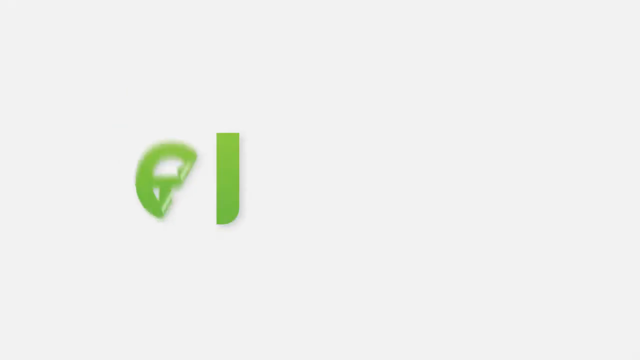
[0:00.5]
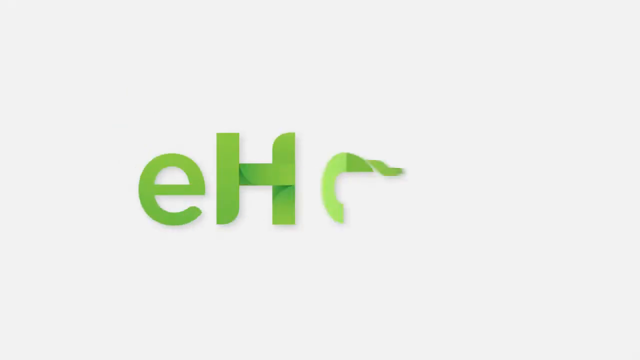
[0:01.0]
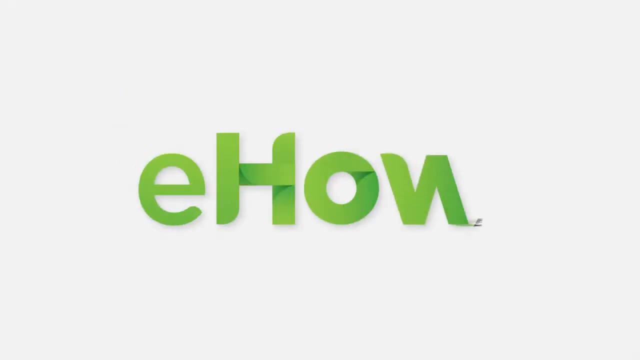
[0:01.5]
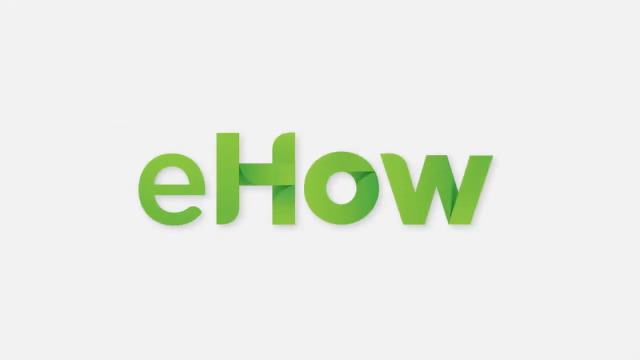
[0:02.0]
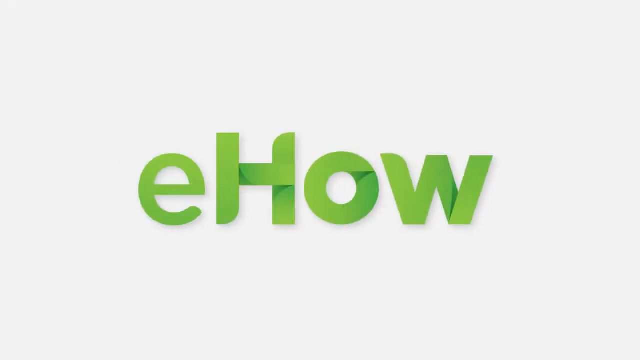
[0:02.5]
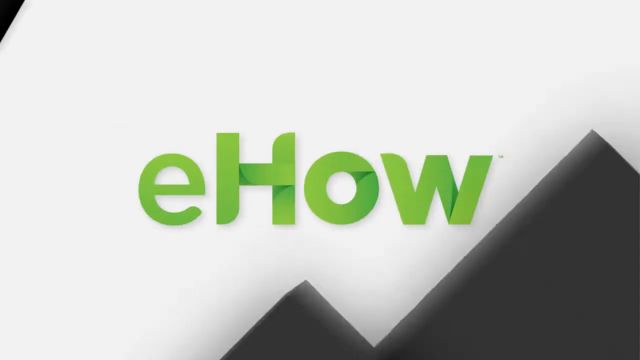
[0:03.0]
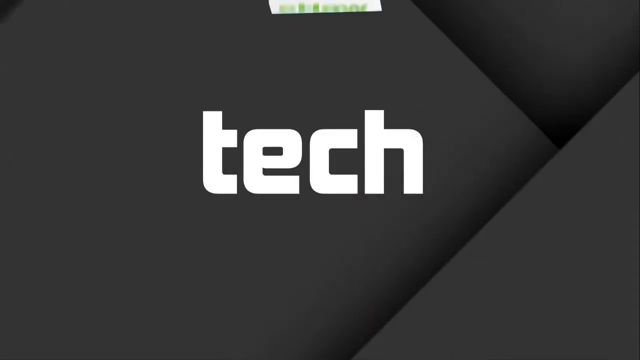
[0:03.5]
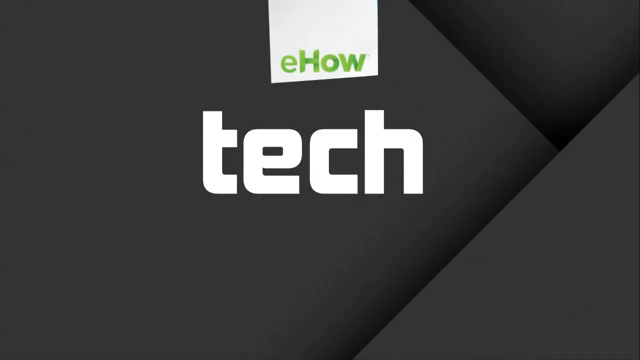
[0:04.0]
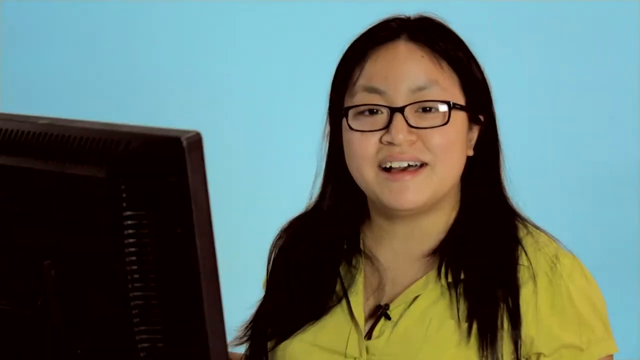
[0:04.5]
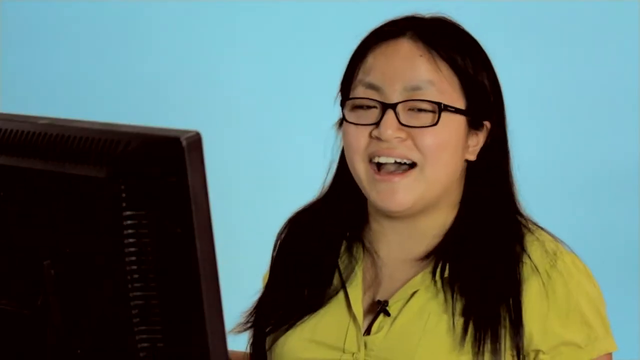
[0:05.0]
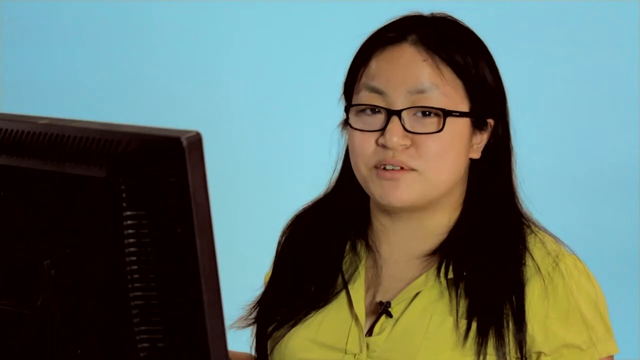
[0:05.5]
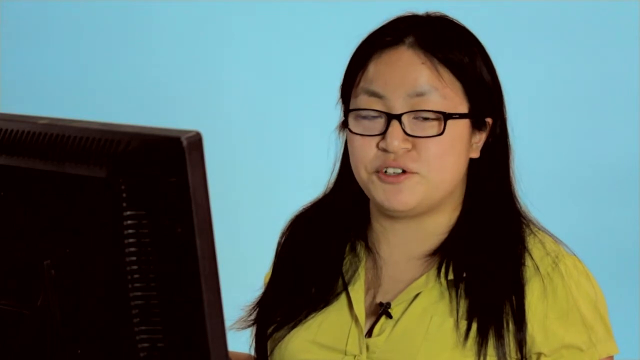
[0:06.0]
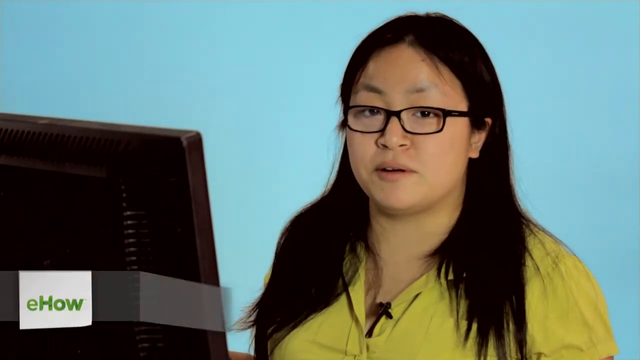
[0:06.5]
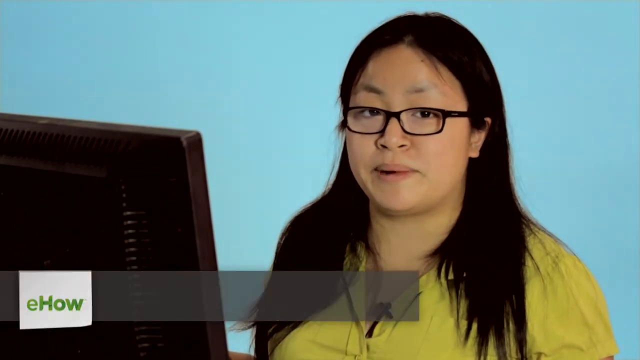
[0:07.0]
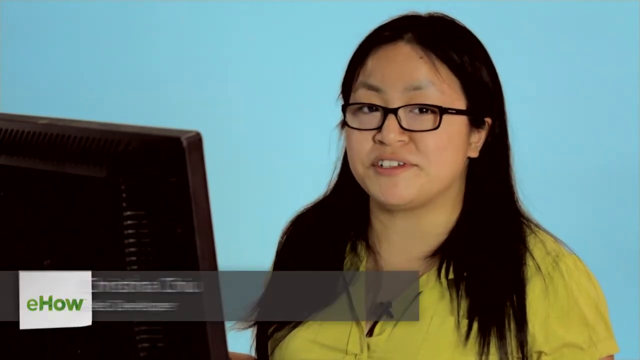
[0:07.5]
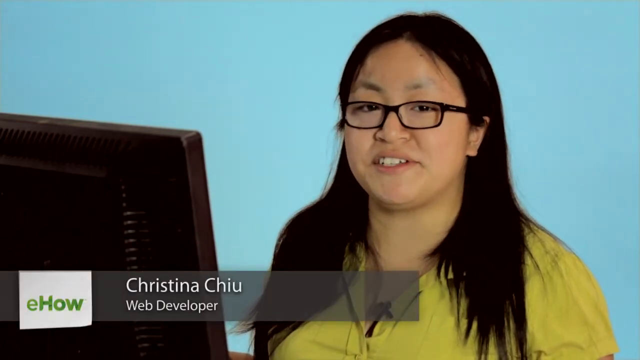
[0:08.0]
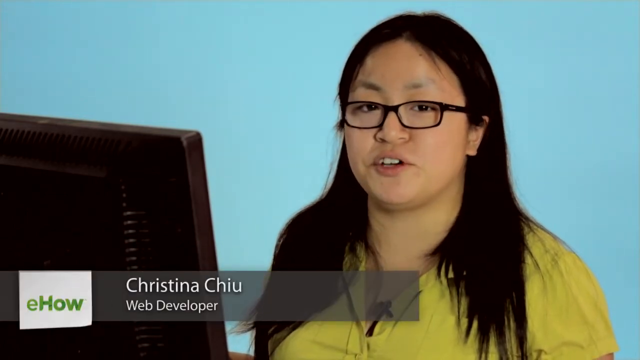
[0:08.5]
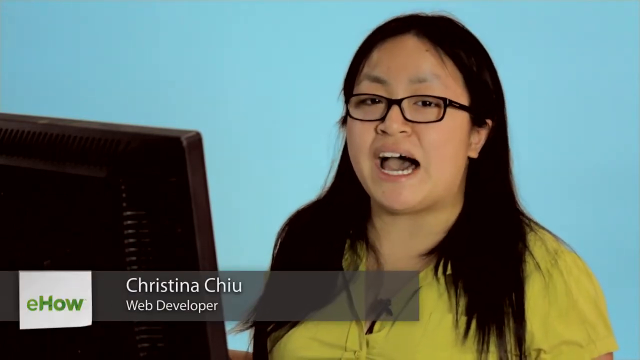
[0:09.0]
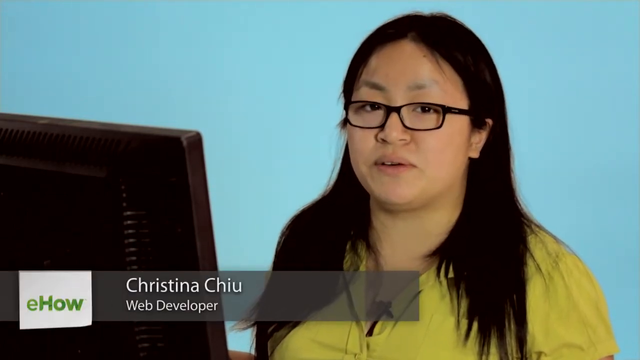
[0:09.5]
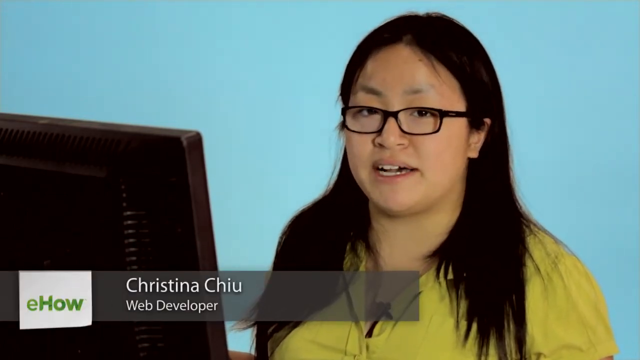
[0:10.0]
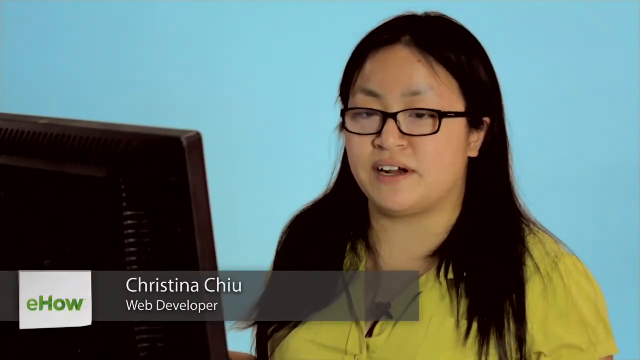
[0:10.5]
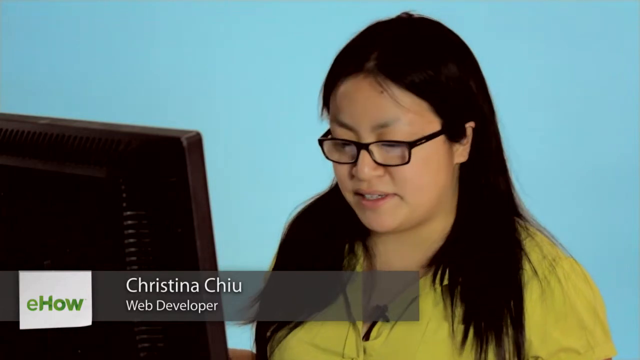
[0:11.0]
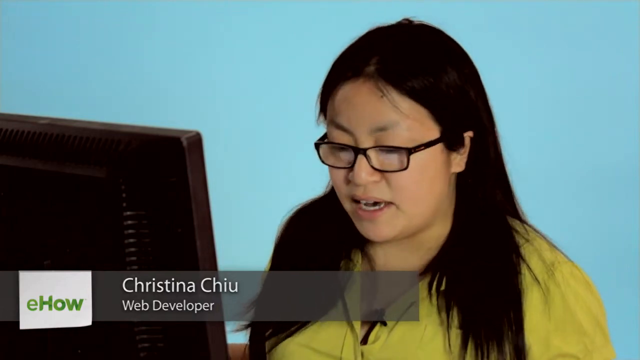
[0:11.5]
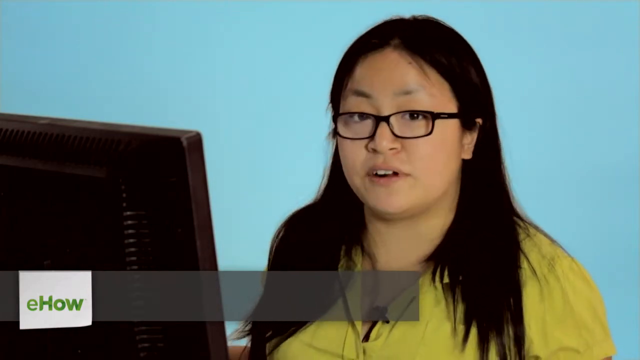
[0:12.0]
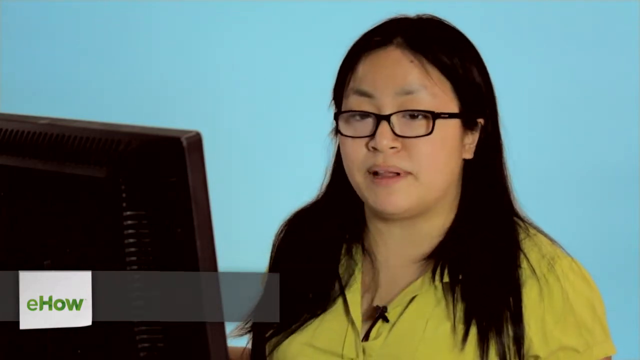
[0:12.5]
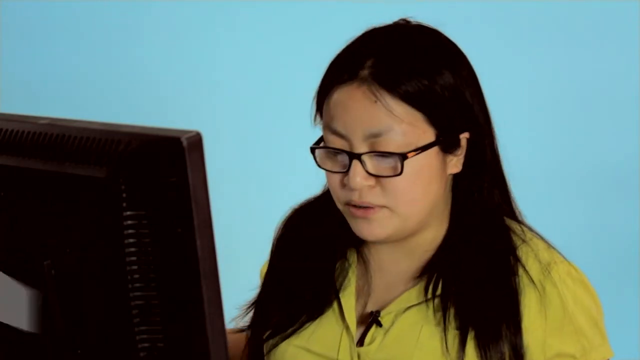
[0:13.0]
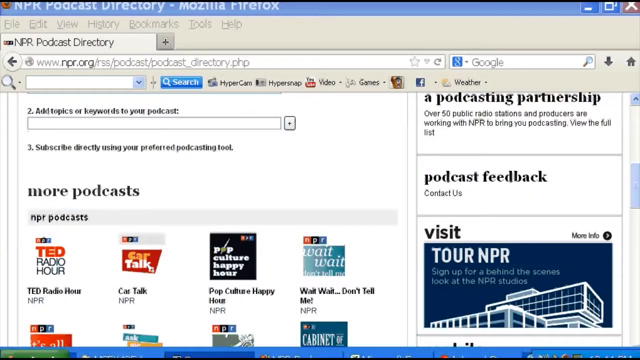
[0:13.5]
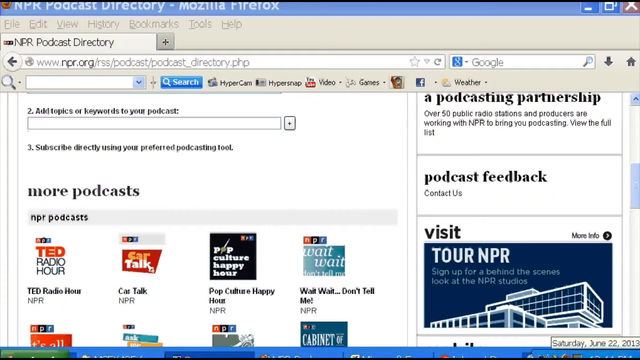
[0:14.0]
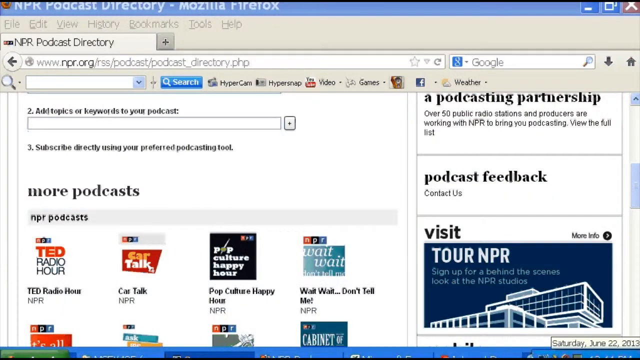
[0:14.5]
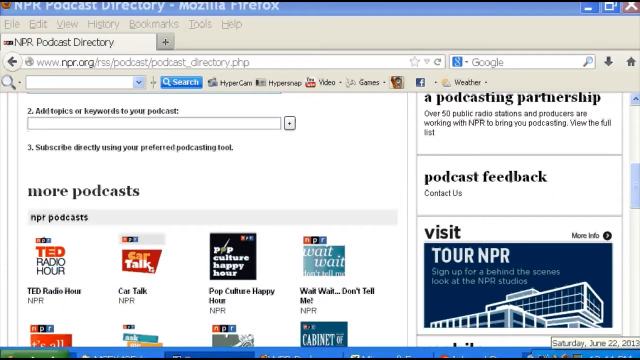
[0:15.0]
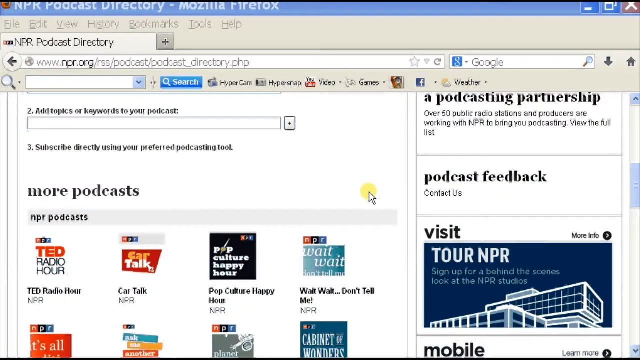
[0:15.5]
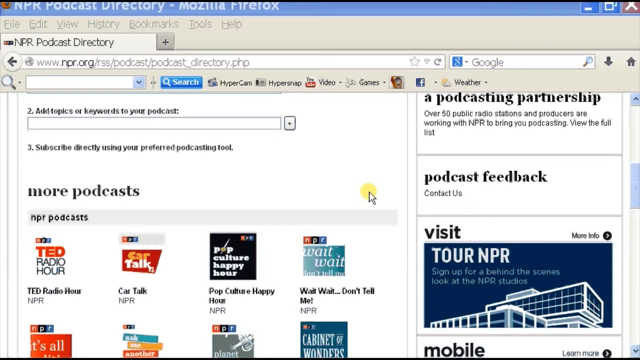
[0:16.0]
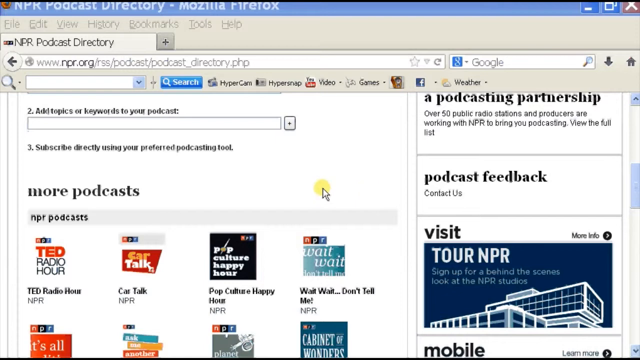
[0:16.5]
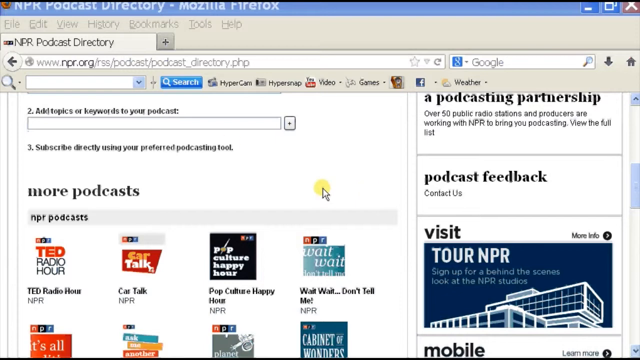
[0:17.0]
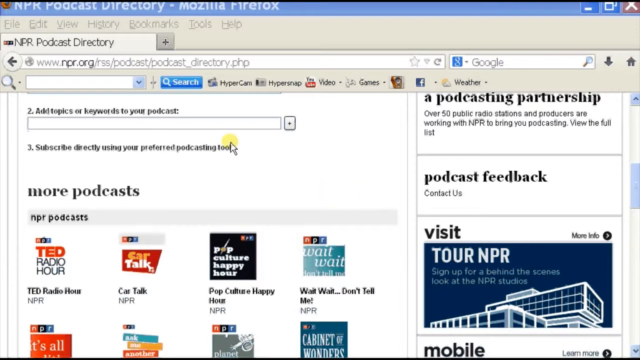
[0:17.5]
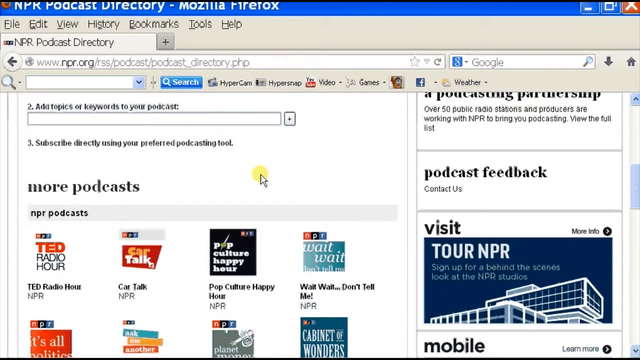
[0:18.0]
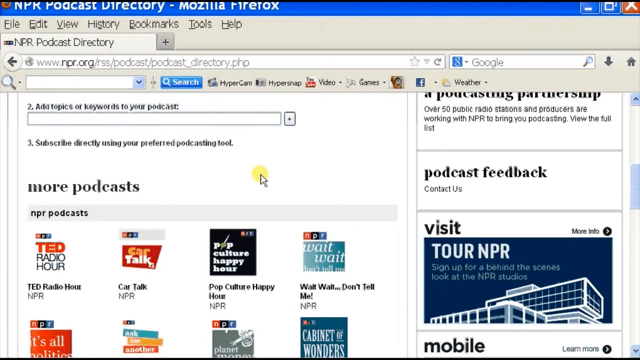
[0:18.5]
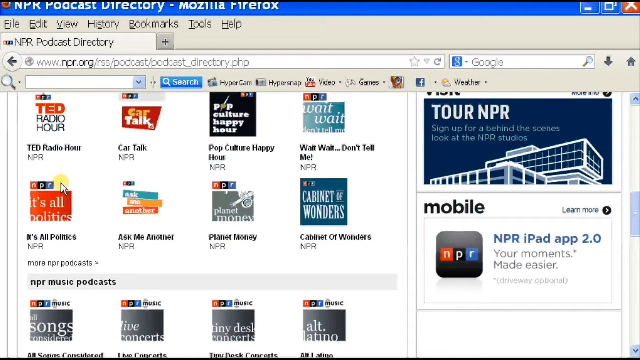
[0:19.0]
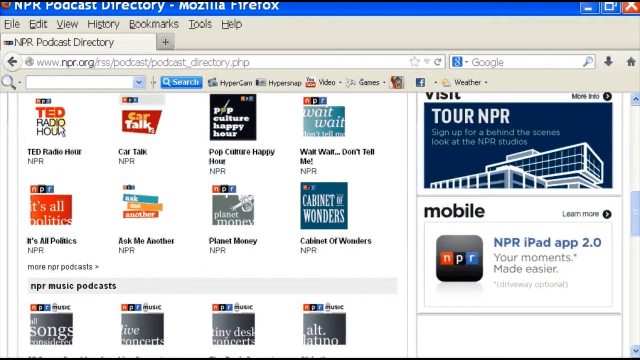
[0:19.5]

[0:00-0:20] The word "ehow" appears in all green letters, followed by another screen that says "tech". Next comes video of a woman who looks to be of either Chinese or possibly Vietnamese descent. She wears black glasses and a green shirt, has long black hair, and is sitting in front of a computer. Her name is Christina Chu and she is a web developer. She opens a website in Firefox, the NPR podcast directory, which offers several podcasts to choose from, such as TED Radio Hour, Car Talk, Pop Culture Happy Hour and Wait Wait Don't Tell Me. She scrolls down to another list of podcasts but has not yet clicked on any particular one.